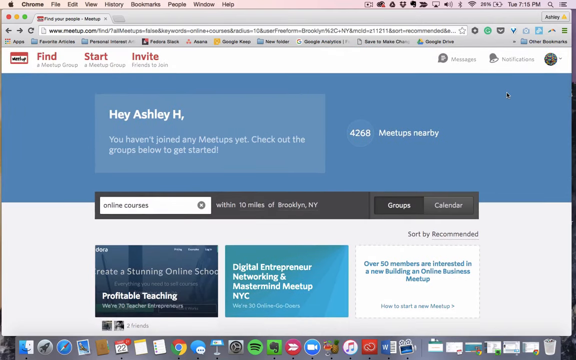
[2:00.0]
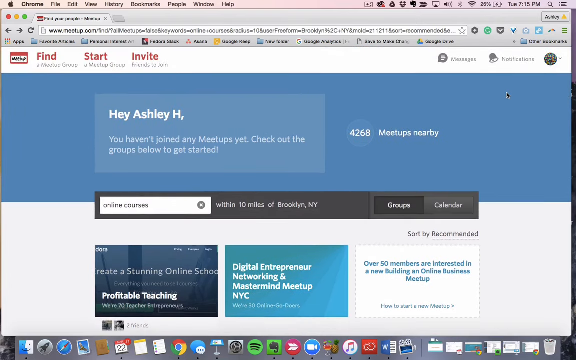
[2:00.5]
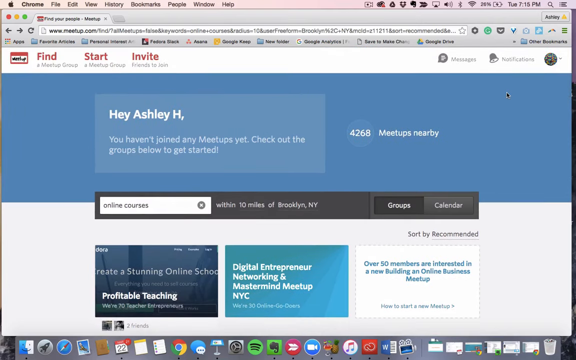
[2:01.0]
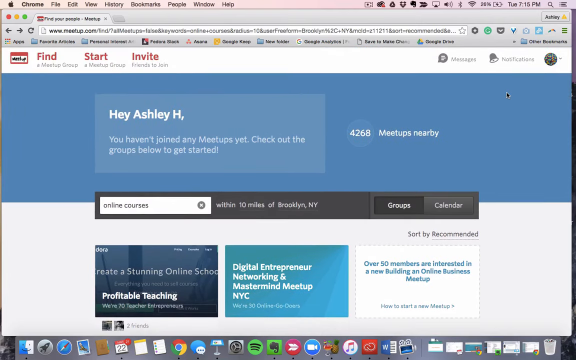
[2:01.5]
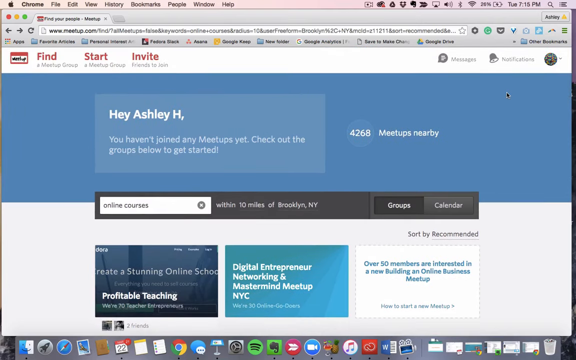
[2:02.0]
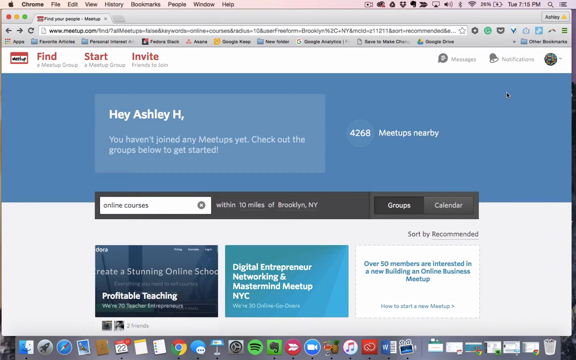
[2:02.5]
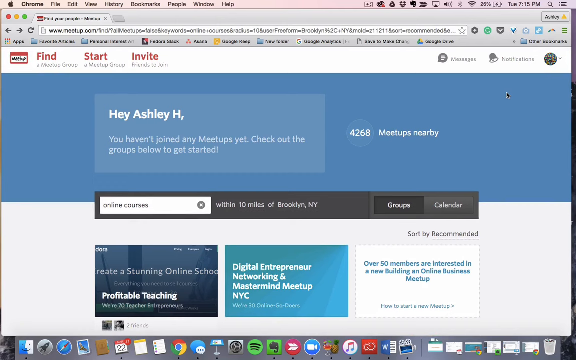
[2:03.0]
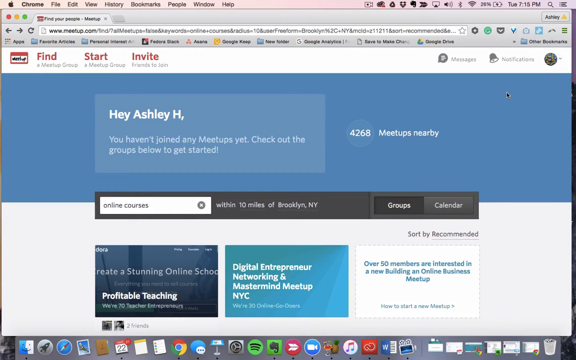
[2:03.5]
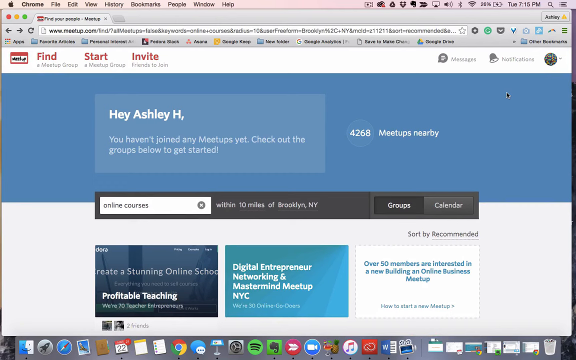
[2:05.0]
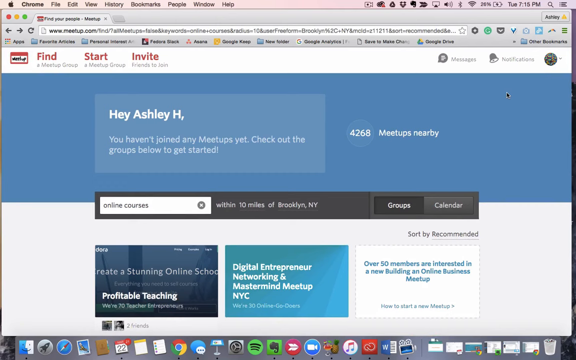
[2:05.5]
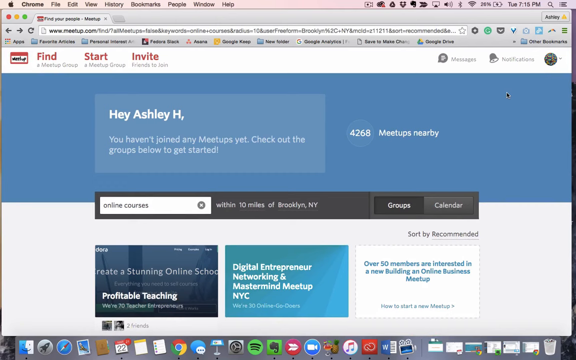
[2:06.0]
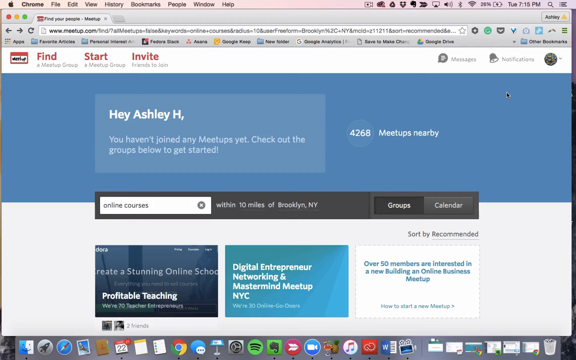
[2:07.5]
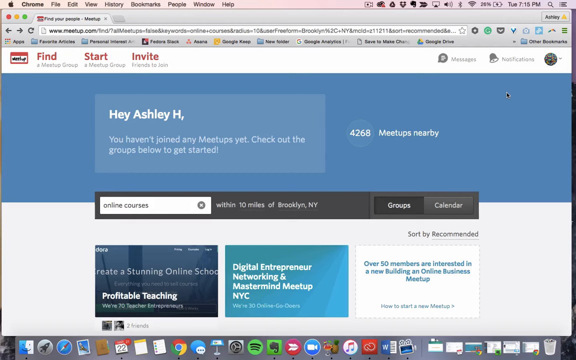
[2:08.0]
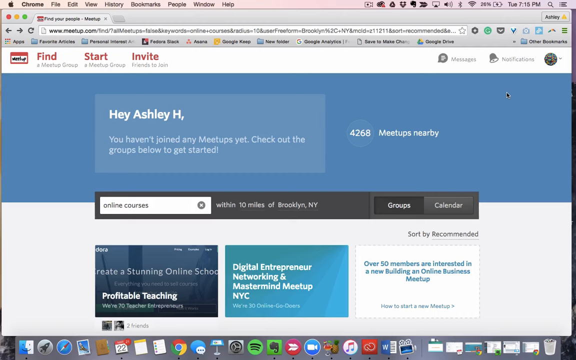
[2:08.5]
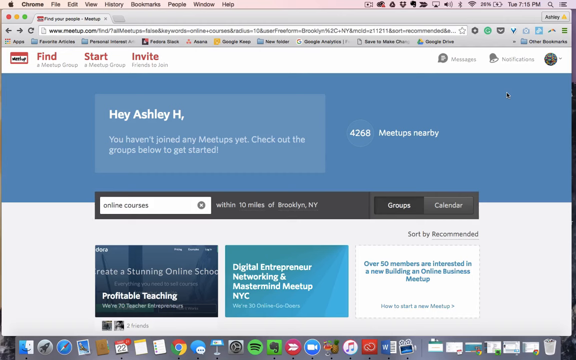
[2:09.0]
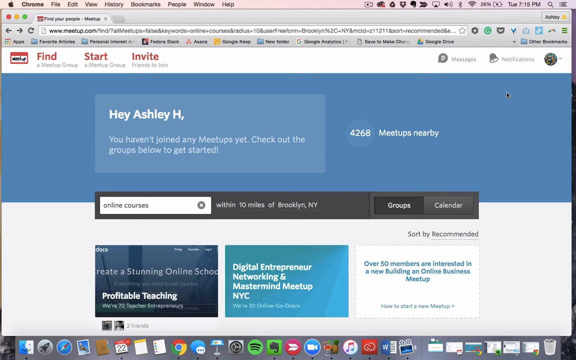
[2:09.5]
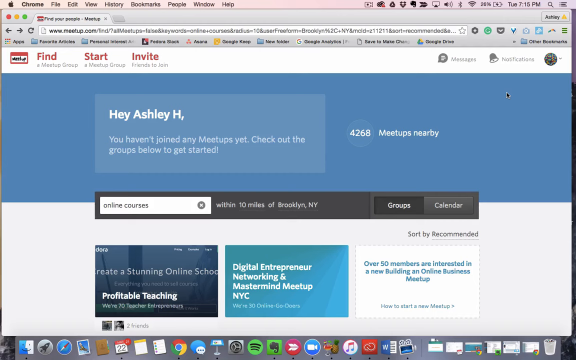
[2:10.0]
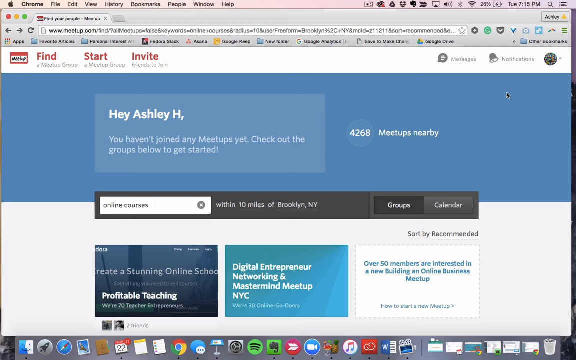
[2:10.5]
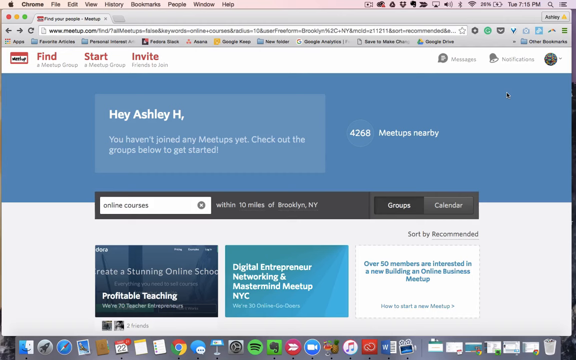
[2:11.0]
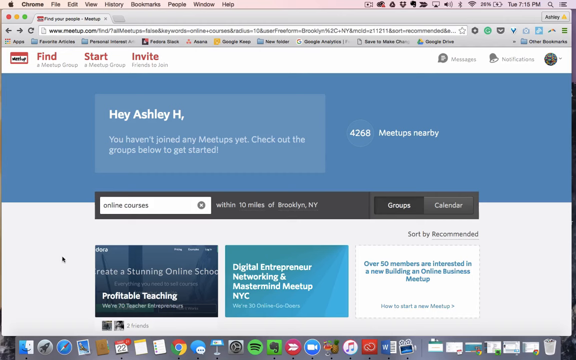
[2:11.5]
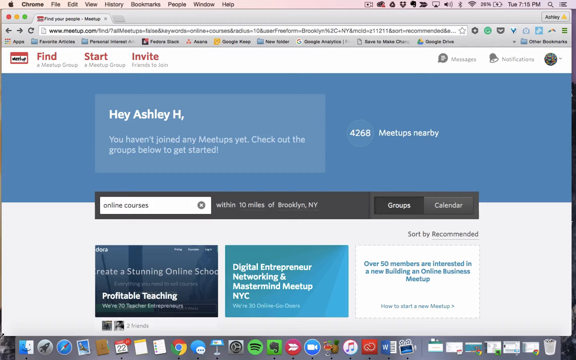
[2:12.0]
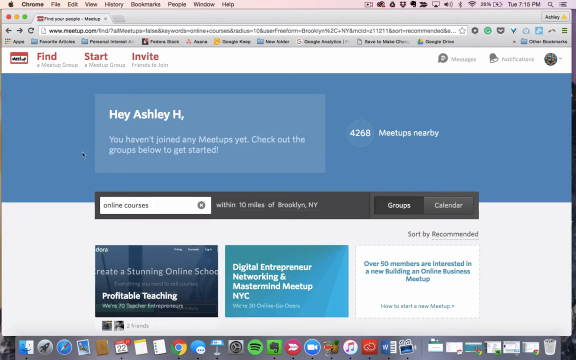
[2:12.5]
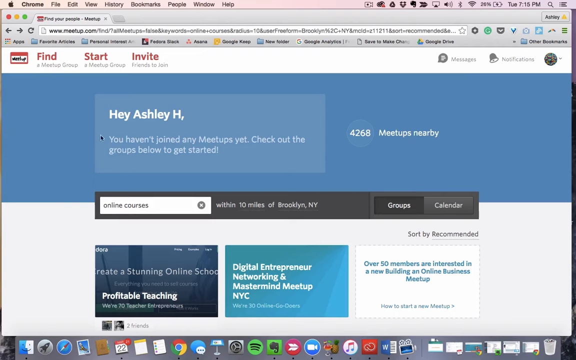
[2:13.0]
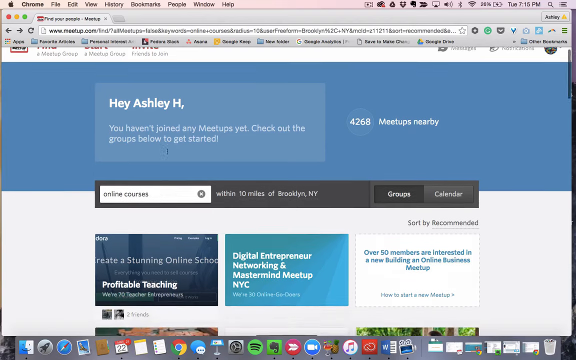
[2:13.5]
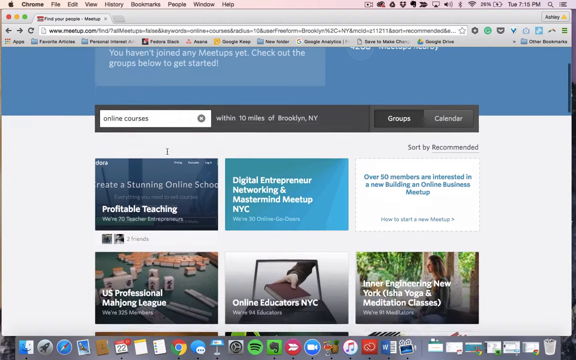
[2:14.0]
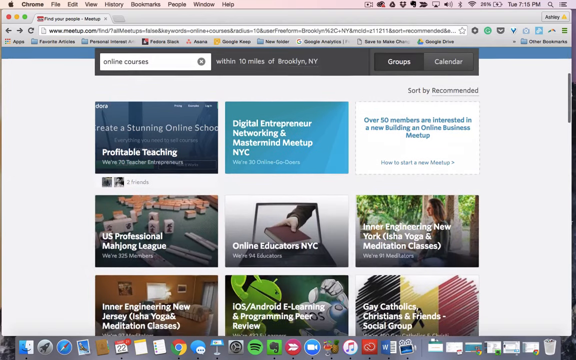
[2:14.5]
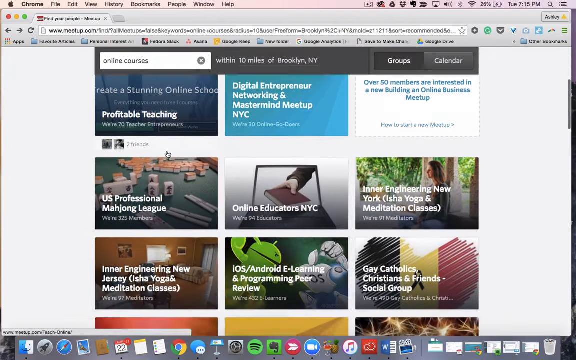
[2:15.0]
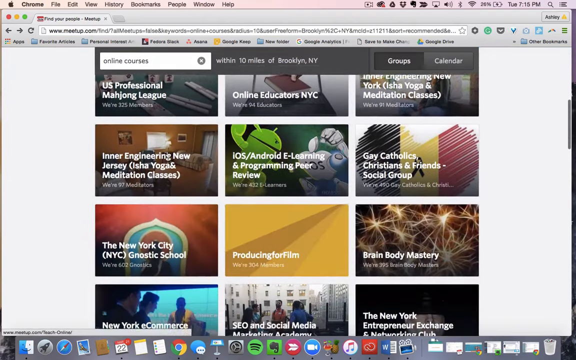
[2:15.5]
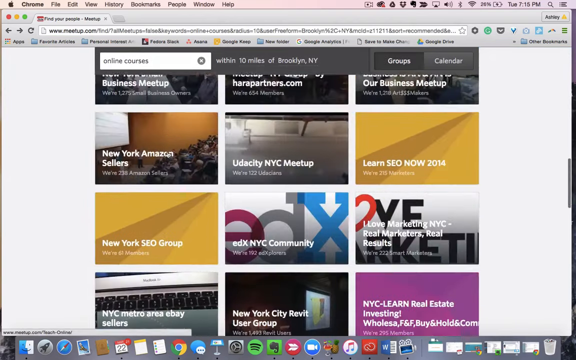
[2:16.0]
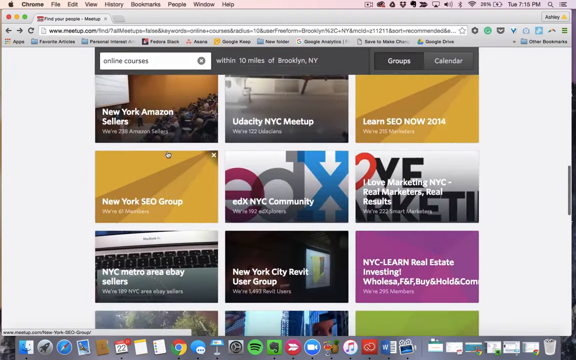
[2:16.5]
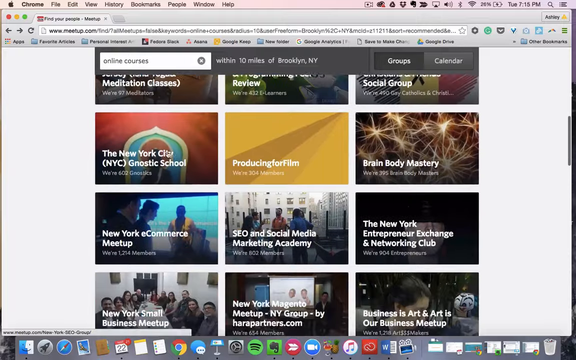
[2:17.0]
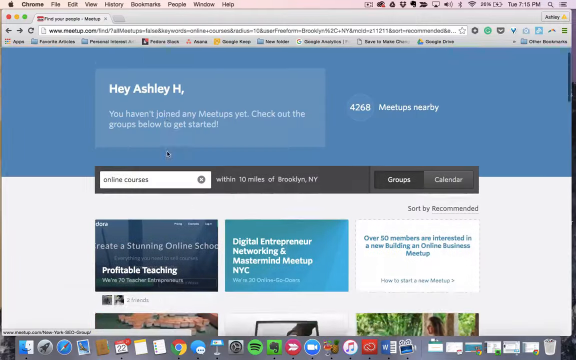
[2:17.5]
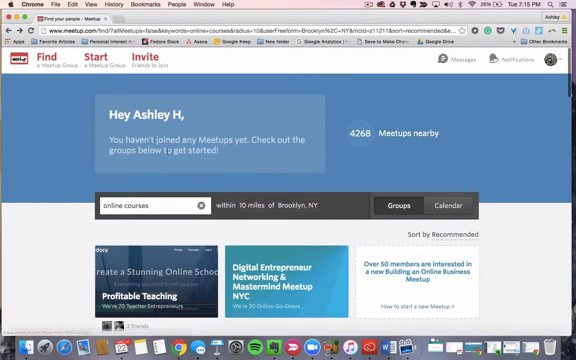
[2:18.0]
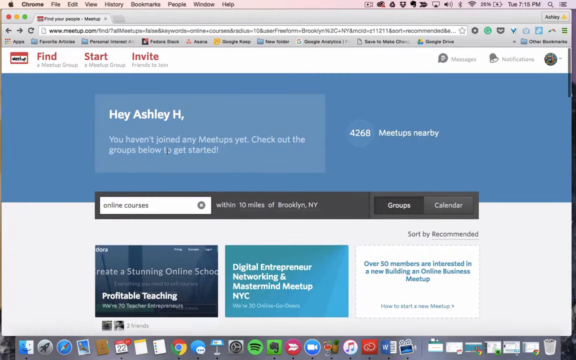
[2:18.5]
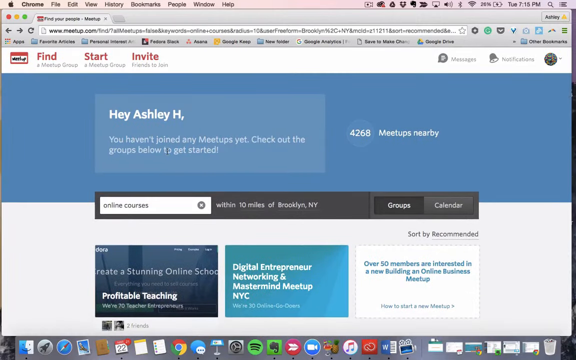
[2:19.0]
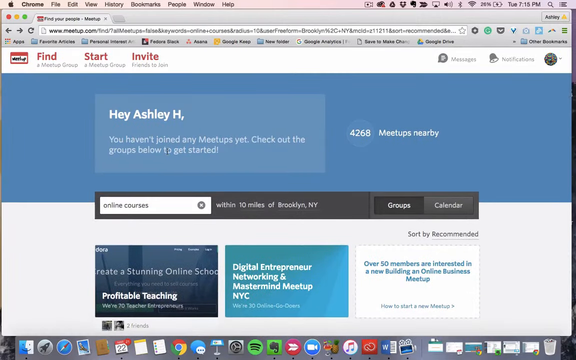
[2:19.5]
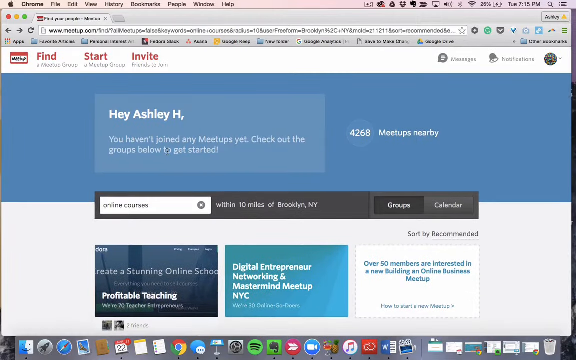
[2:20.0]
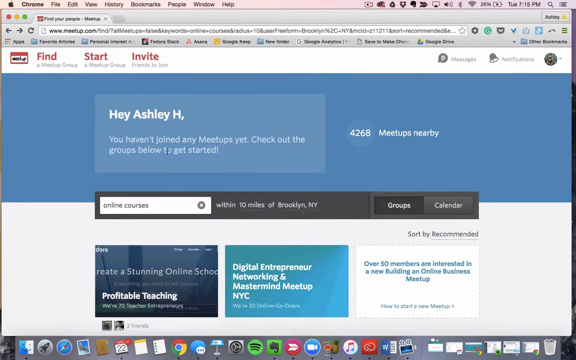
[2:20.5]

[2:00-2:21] Back on the page of online courses results, the user continuously scrolls up and down through the options, moving an arrow up and down the page. The view then returns to the meetups page shown at the beginning, still on Ashley's account, which has not been active on this meetup page. She scrolls through the options given for online courses and seems to be looking for more options to look at.